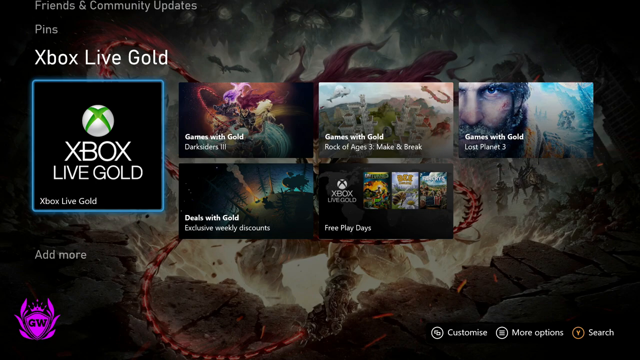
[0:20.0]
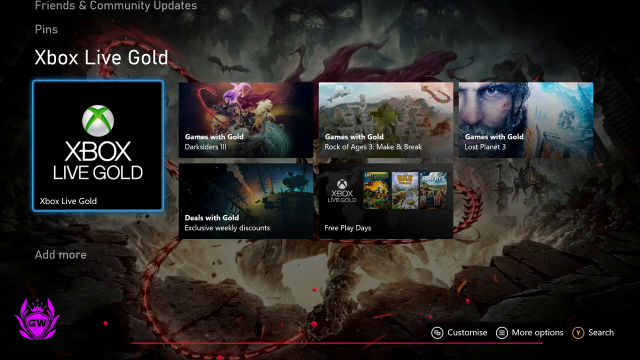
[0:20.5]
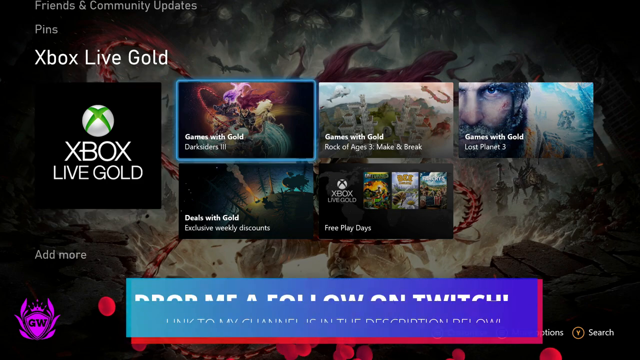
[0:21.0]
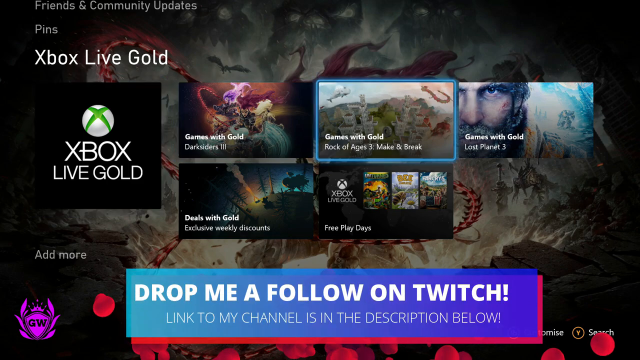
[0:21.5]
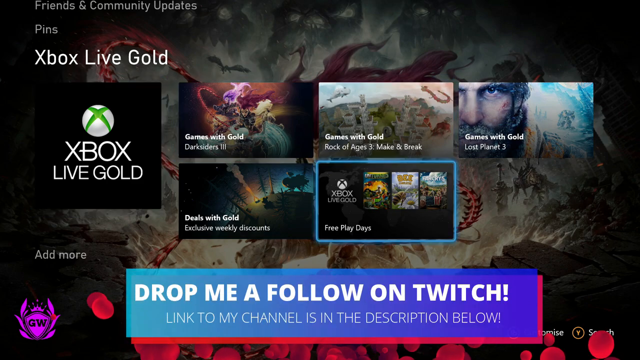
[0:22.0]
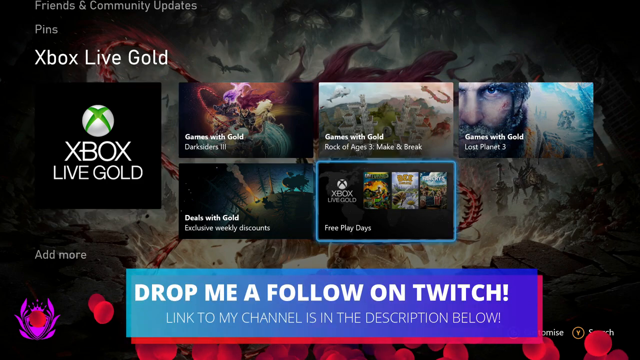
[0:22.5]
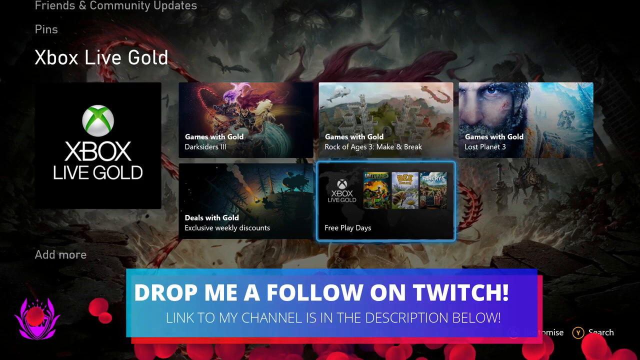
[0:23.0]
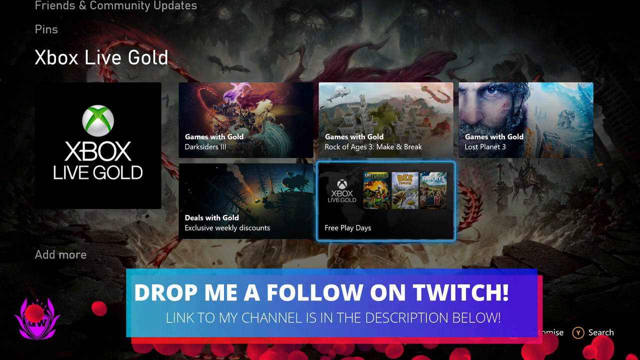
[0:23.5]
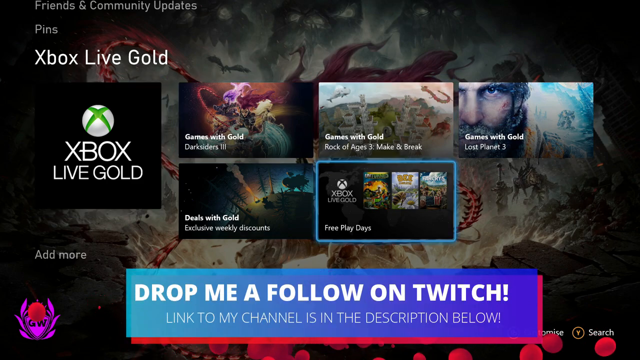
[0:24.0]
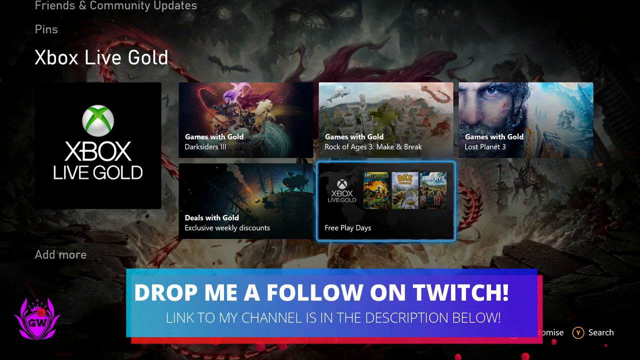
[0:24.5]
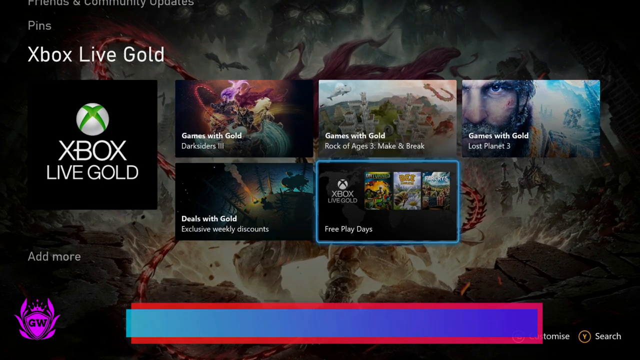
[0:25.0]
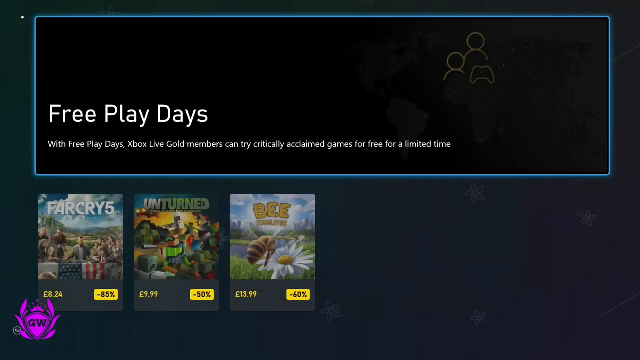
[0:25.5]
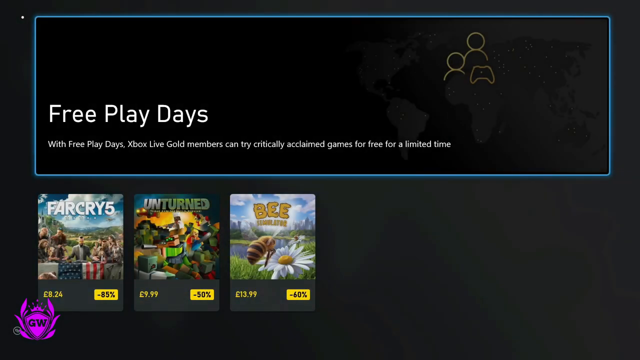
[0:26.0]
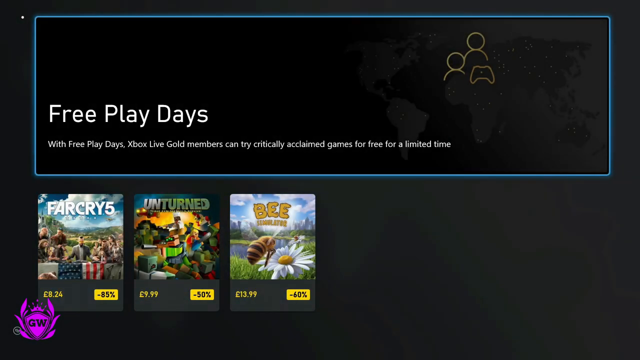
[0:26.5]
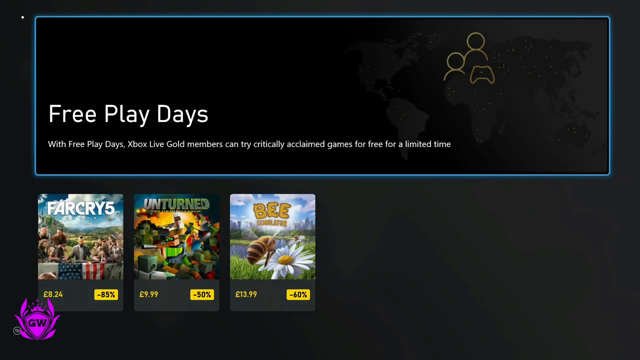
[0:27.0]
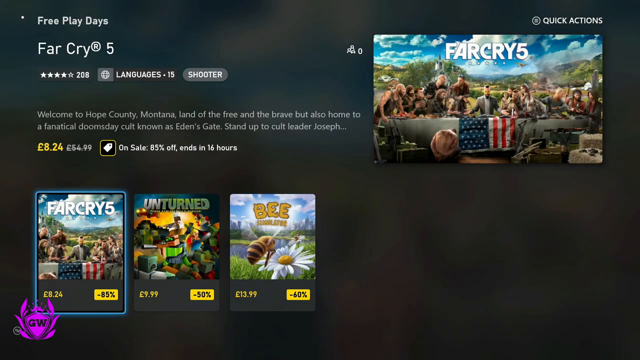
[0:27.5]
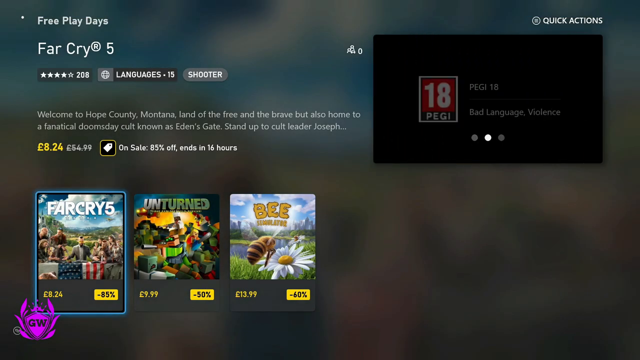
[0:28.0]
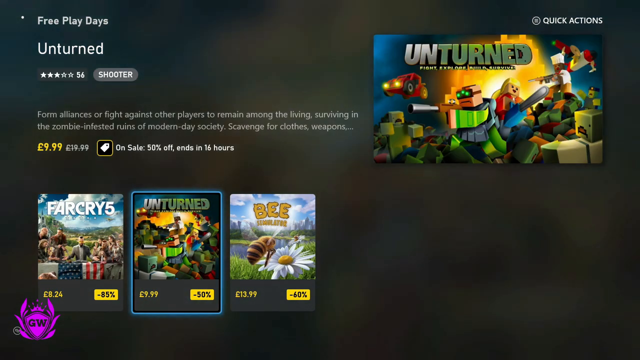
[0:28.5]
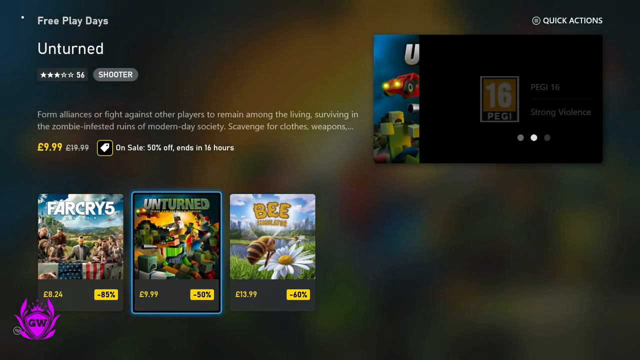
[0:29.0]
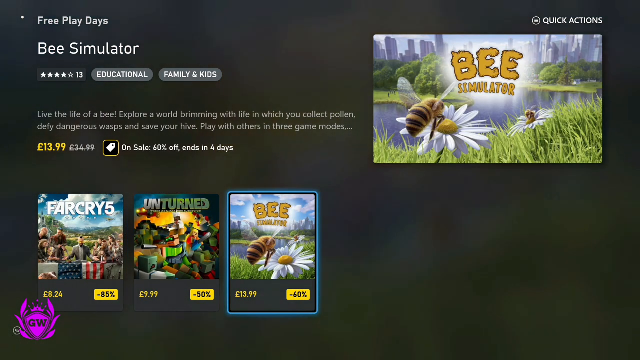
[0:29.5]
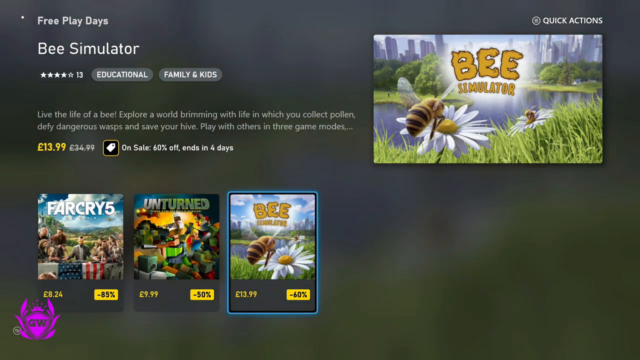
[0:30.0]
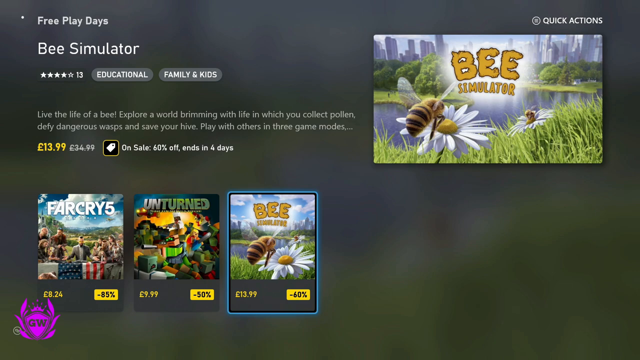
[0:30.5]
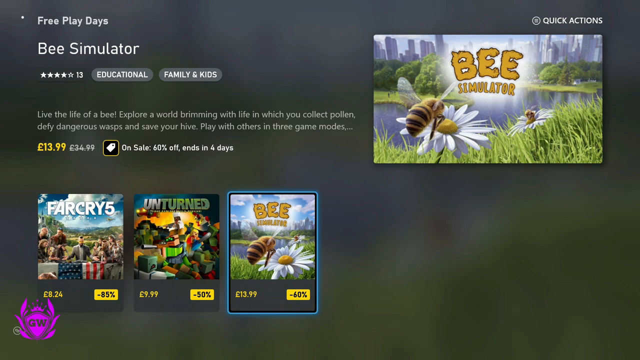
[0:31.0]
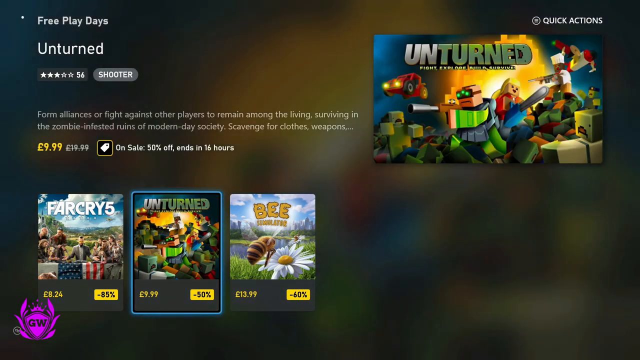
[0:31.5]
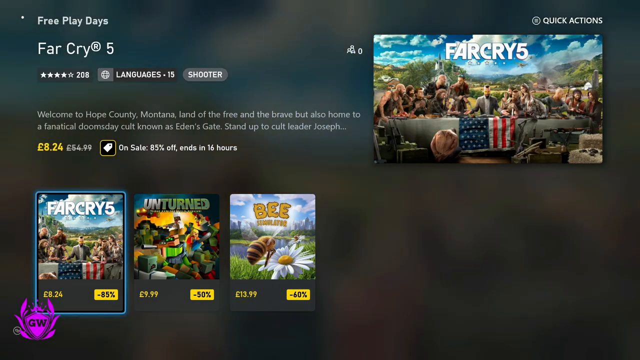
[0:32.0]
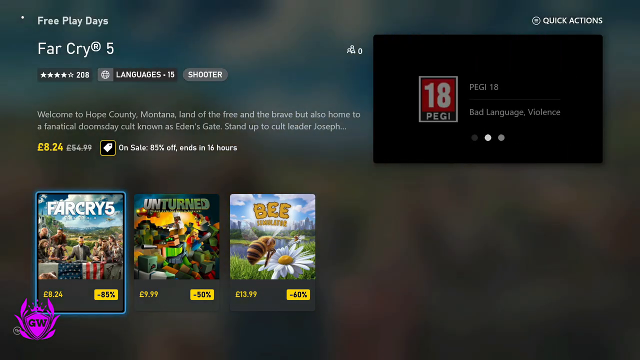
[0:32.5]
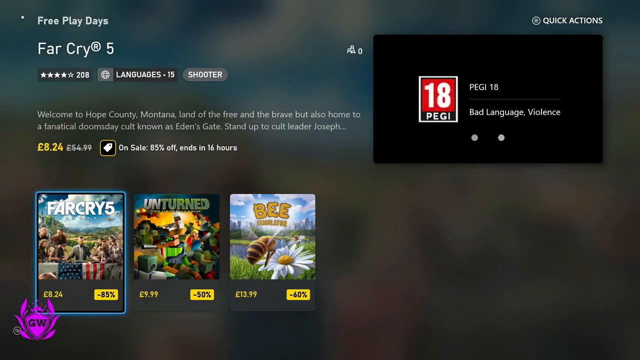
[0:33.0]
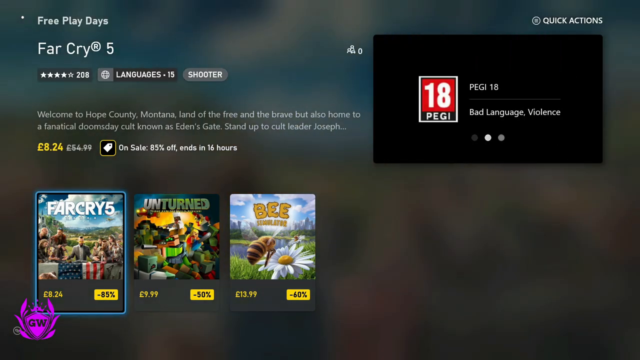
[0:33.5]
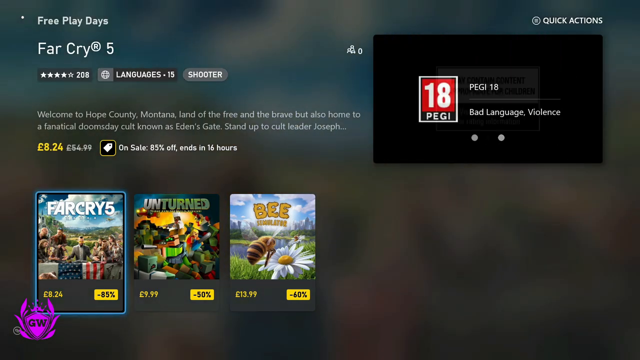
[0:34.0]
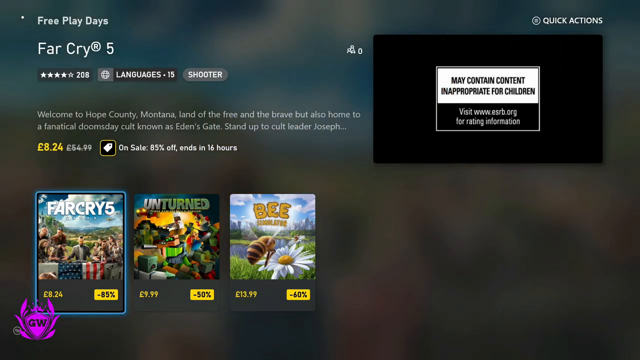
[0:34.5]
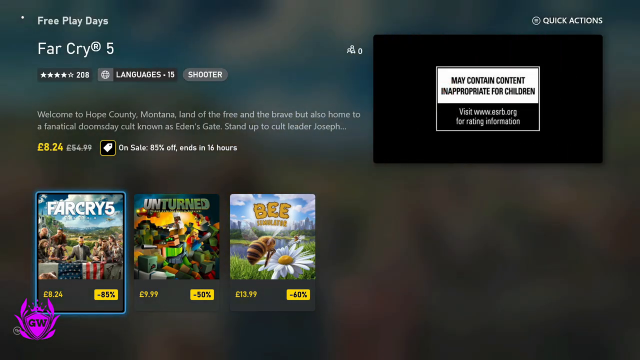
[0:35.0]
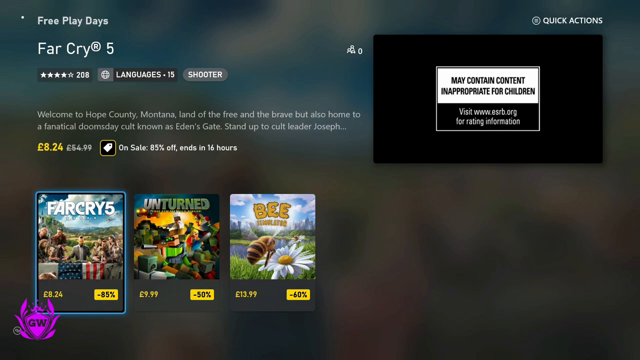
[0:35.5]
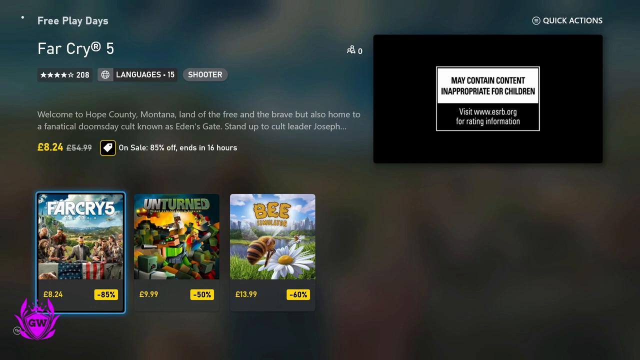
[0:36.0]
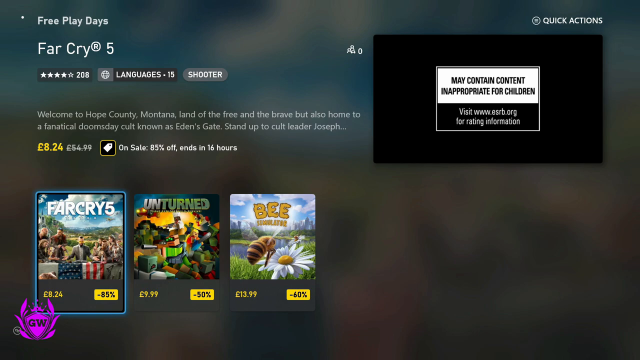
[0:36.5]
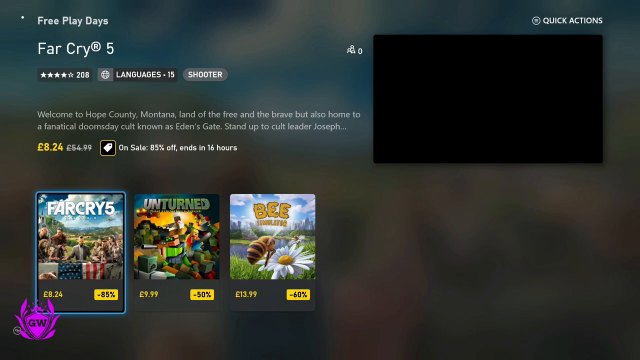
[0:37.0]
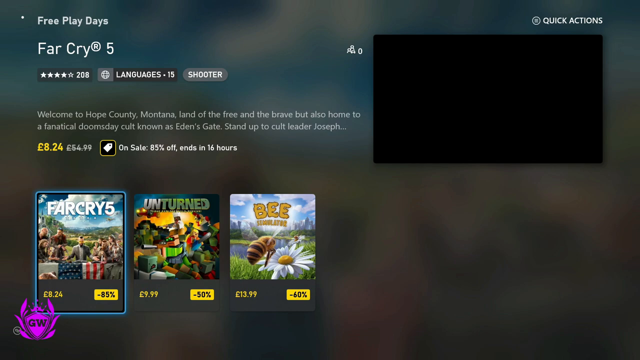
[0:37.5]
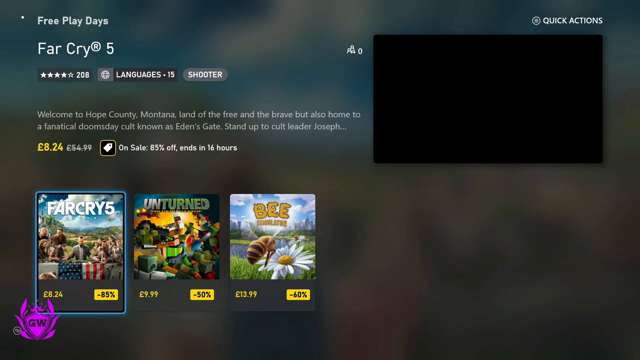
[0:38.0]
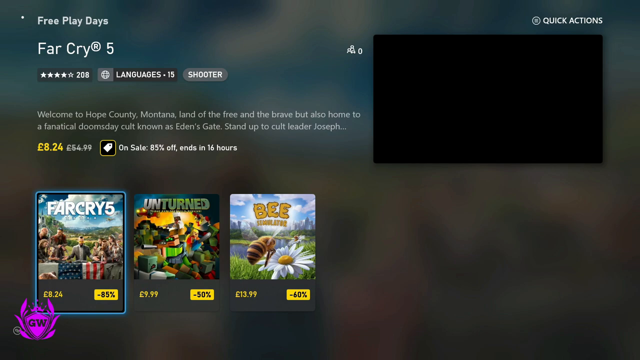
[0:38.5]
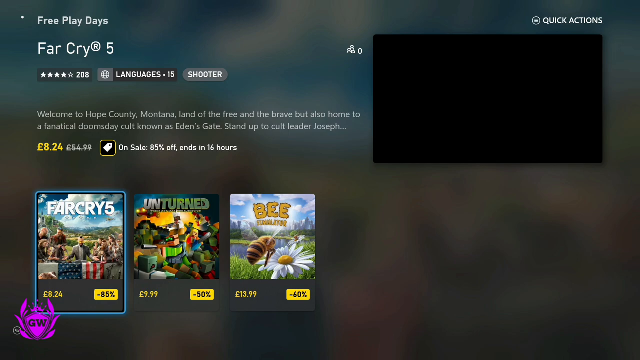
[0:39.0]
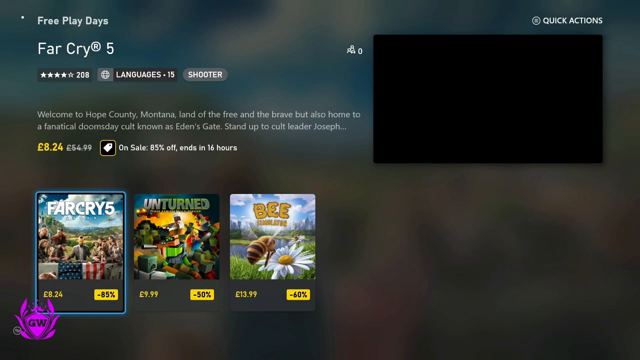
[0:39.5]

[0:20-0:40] The screen shows content about Xbox Live Gold, with "Xbox Live Gold" written toward the upper left corner. Beneath this is a square box showing Xbox Live Gold on a black background, outlined in neon blue. Next to it are two rows: three video games on the top row, and on the second row two pop-up boxes, one showing "deals with gold, exclusive weekly discounts" and the other showing "Xbox Live Gold free play days". The view quickly moves to a pop-up box reading "Drop me a follow-on Twitch", then to the free game days, then to a pop-up box reading "may contain mature content". The game shown is Far Cry 5. Its text reads "Hope County, Montana, land of the free and the brave, but also home to a fanatical doomsday cult known as Eden's Gate" and tells the viewer to stand up to the cult leader, Joseph, before cutting off. The game is on sale for 85% off, and the sale ends in 16 hours.